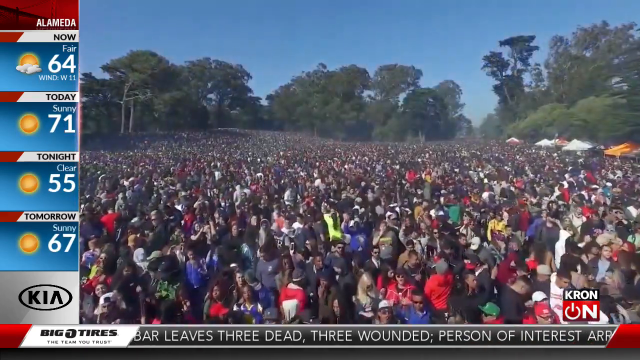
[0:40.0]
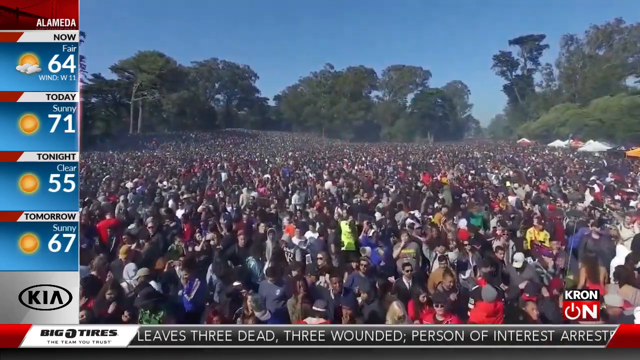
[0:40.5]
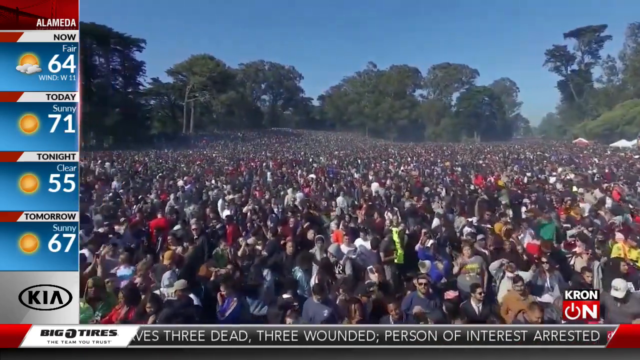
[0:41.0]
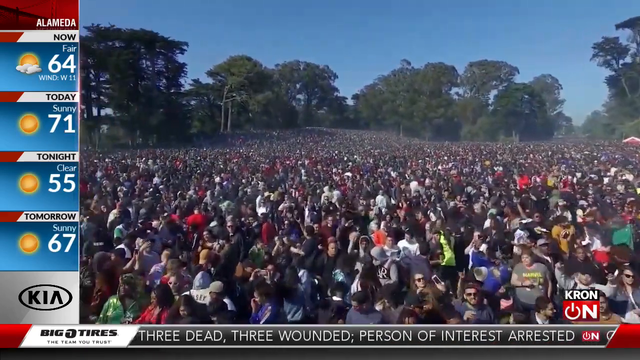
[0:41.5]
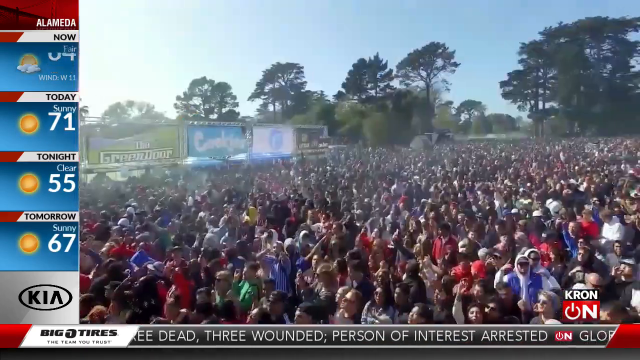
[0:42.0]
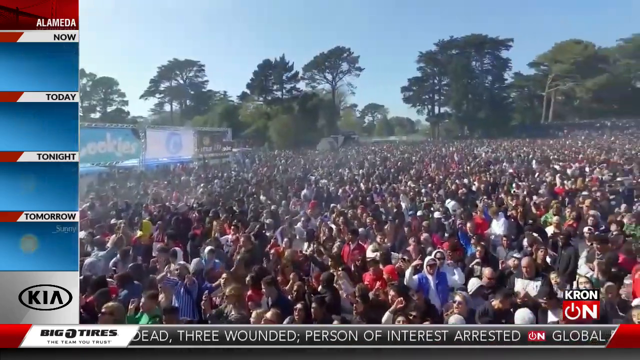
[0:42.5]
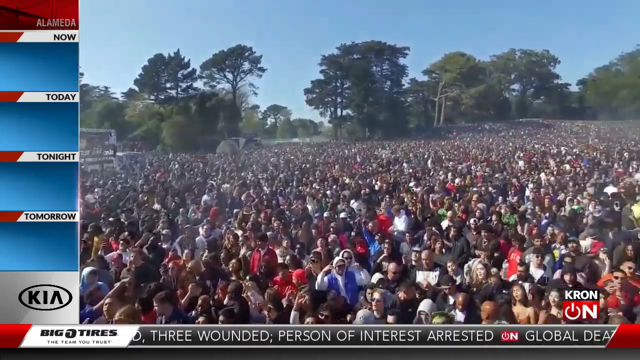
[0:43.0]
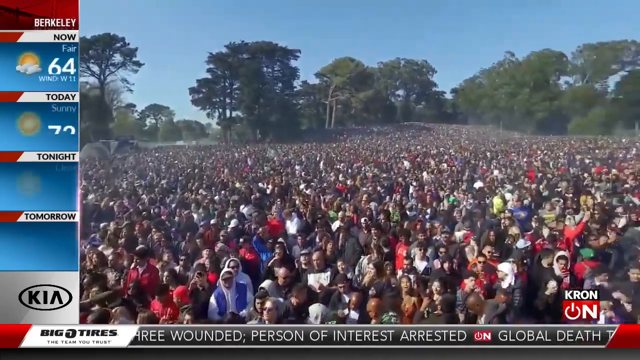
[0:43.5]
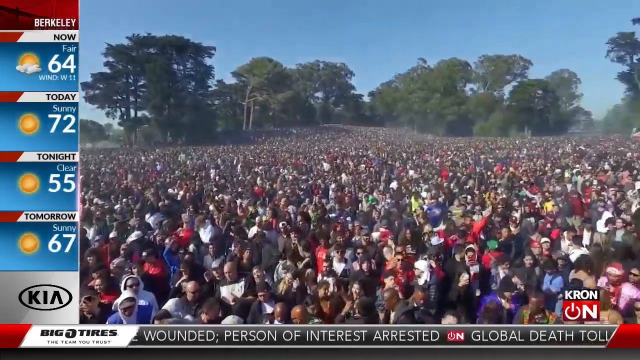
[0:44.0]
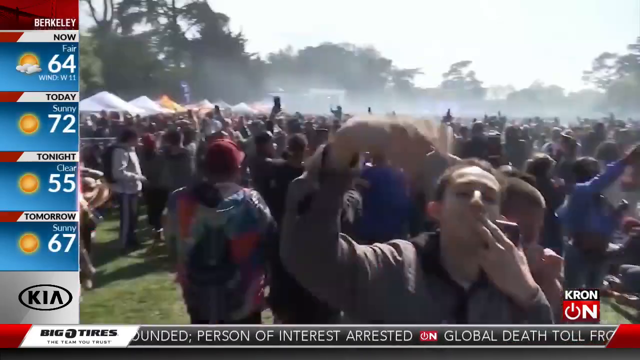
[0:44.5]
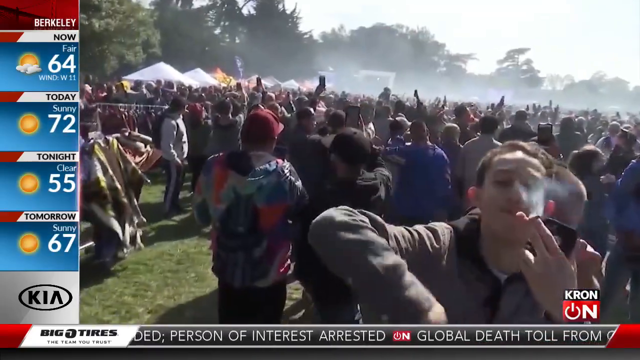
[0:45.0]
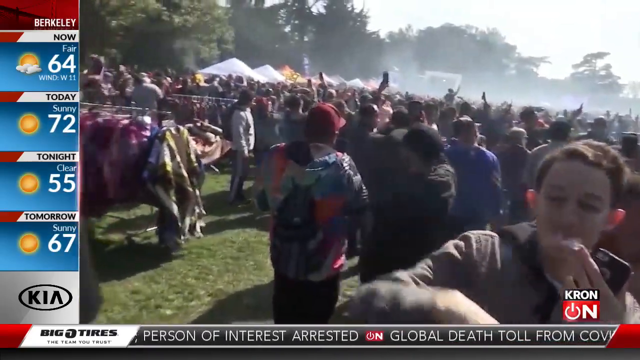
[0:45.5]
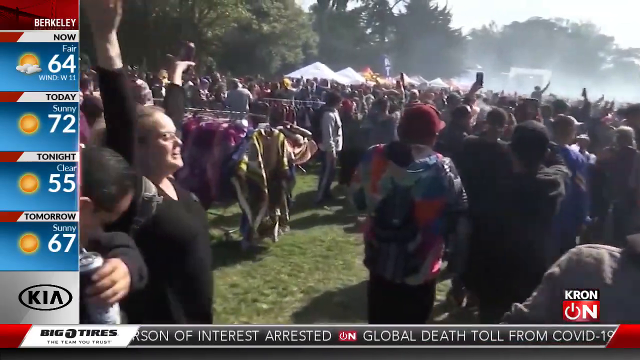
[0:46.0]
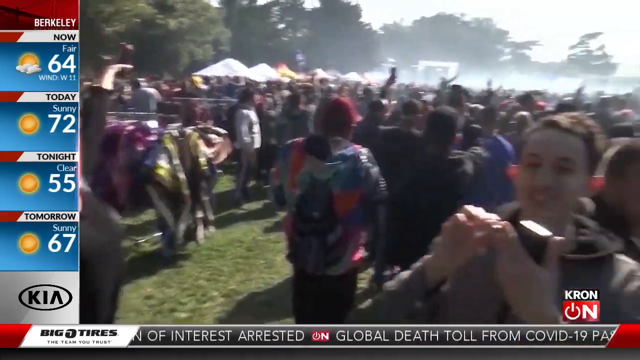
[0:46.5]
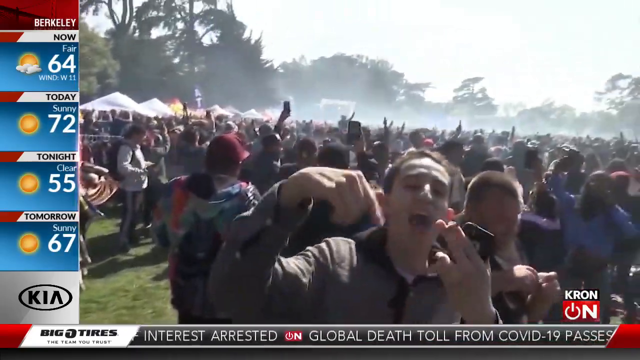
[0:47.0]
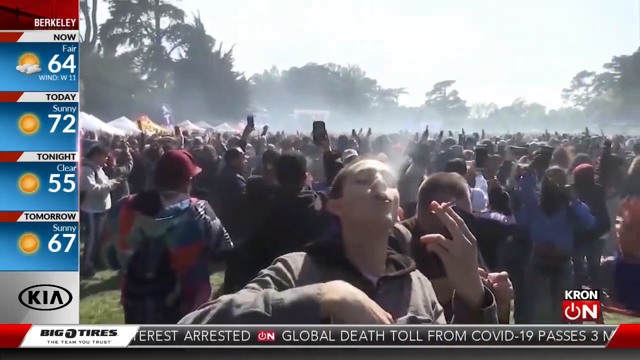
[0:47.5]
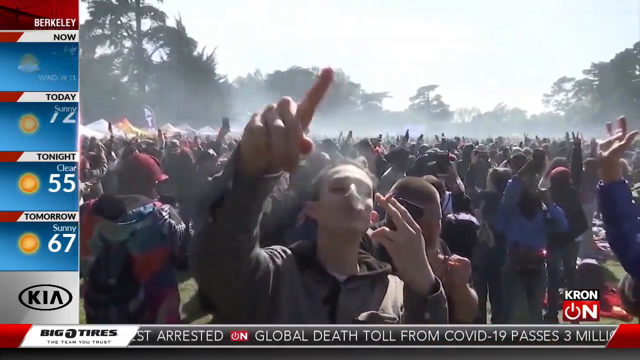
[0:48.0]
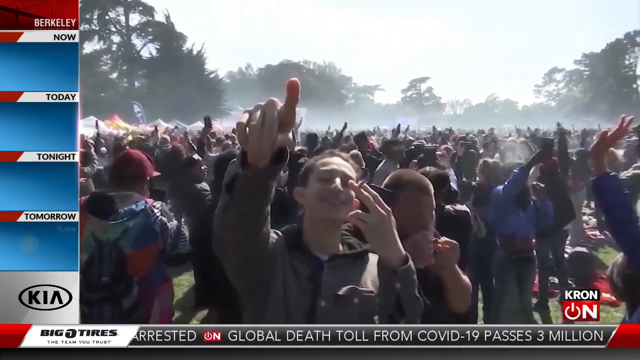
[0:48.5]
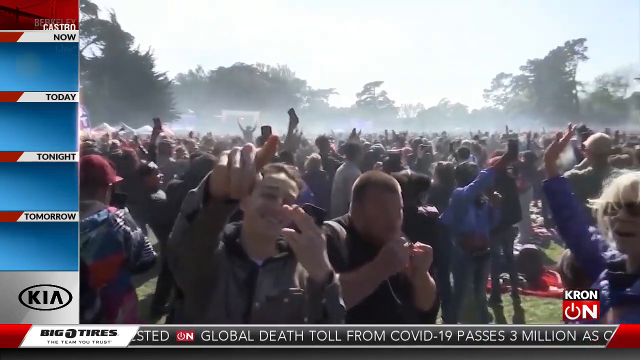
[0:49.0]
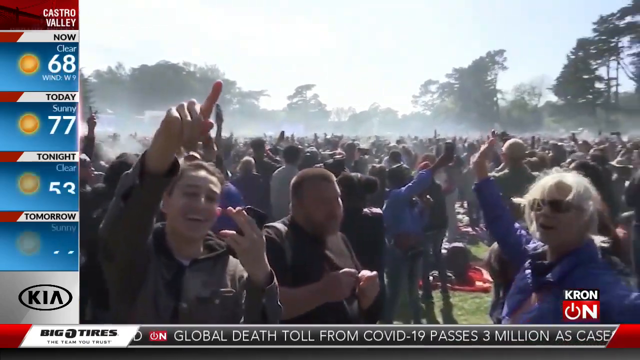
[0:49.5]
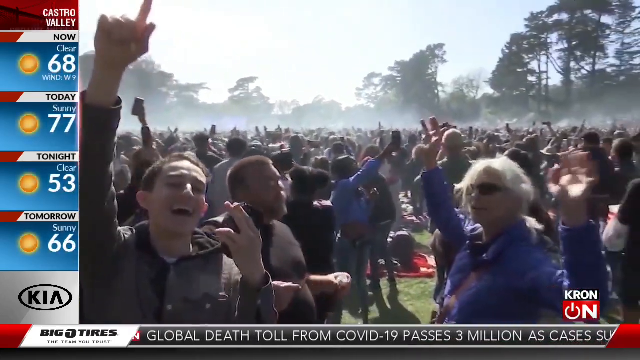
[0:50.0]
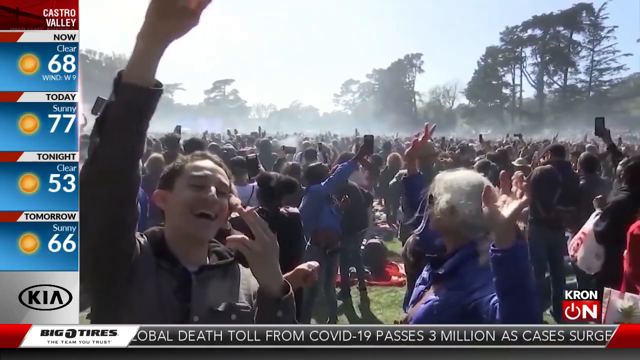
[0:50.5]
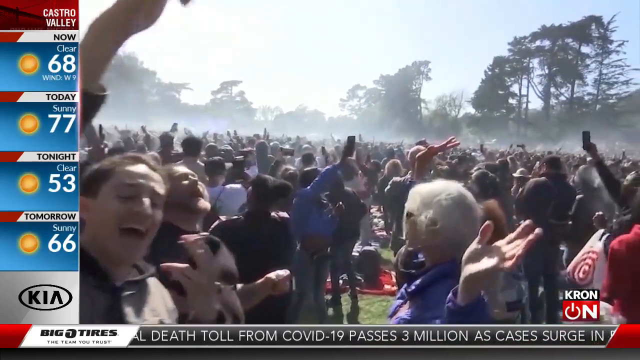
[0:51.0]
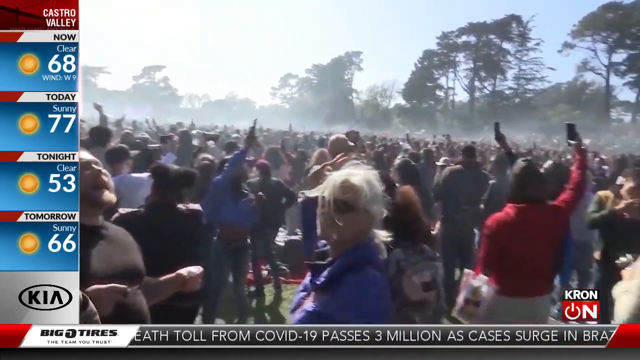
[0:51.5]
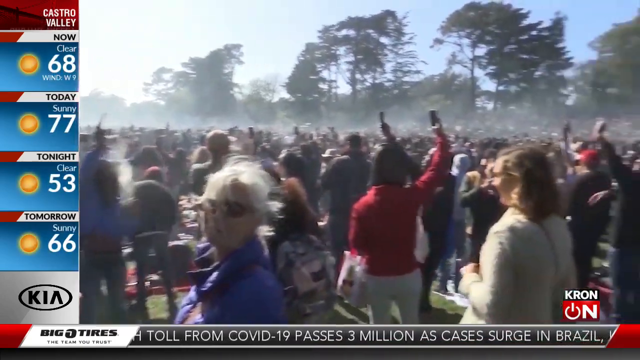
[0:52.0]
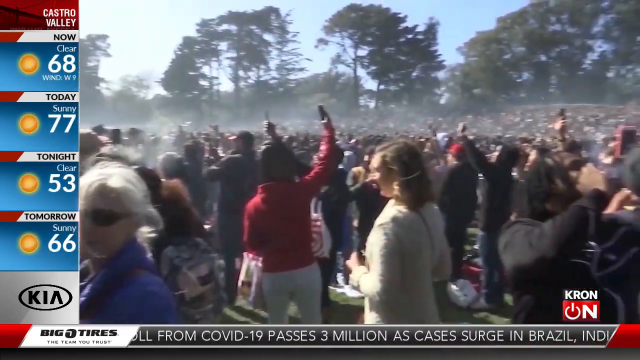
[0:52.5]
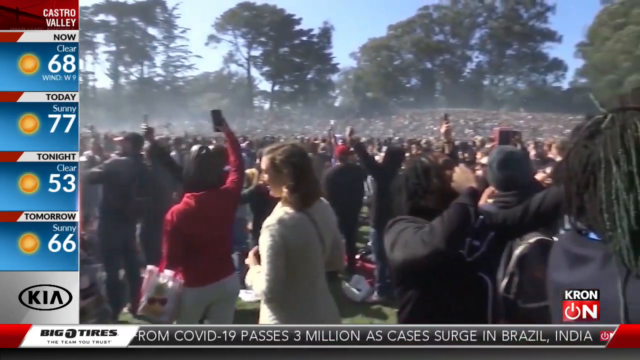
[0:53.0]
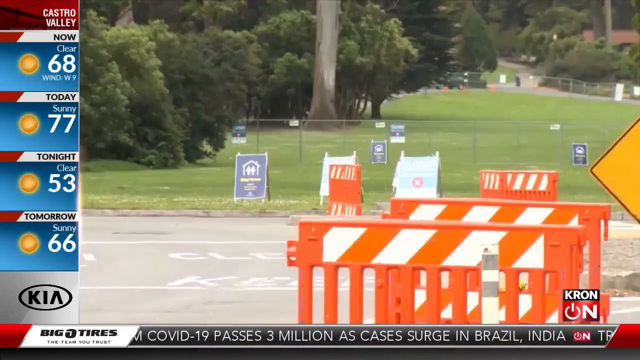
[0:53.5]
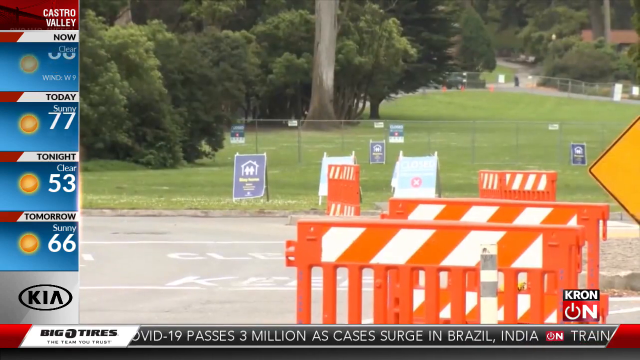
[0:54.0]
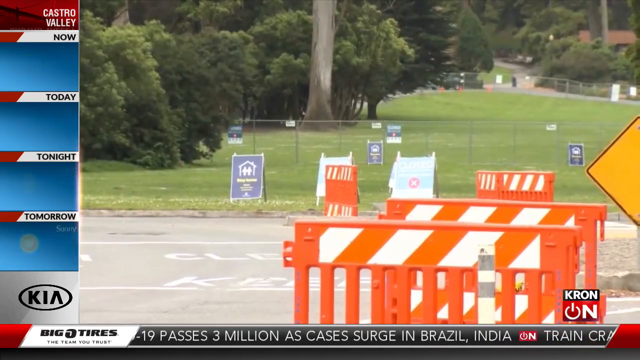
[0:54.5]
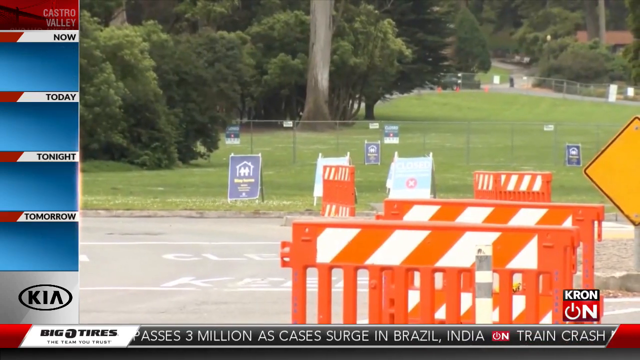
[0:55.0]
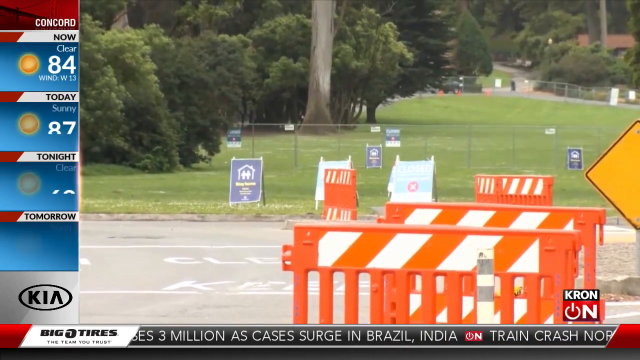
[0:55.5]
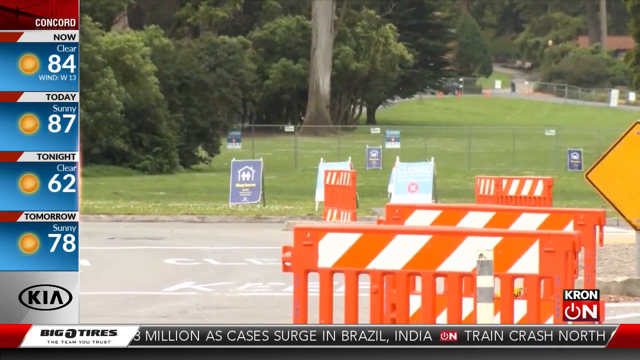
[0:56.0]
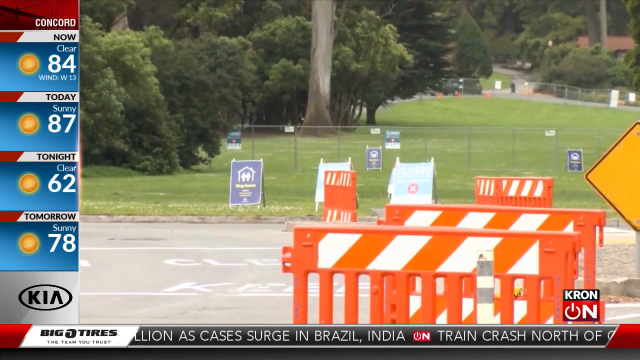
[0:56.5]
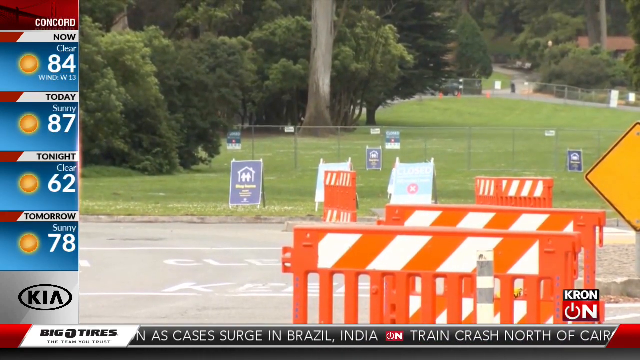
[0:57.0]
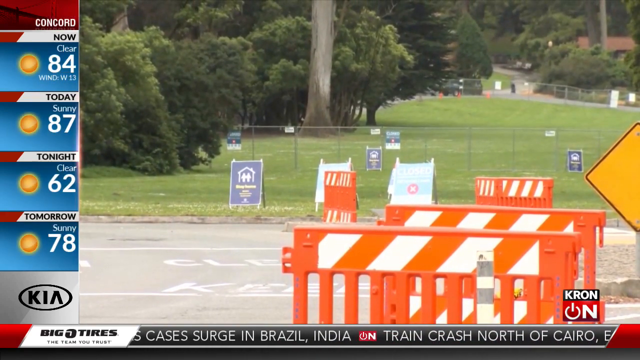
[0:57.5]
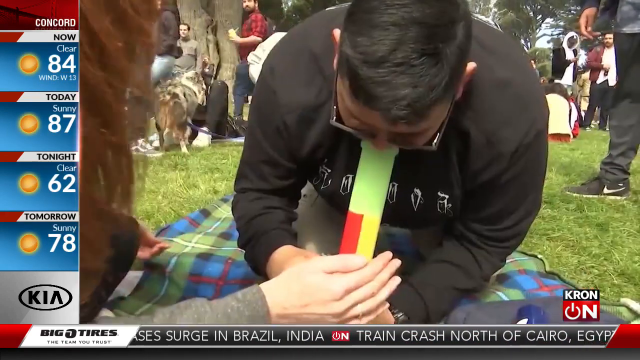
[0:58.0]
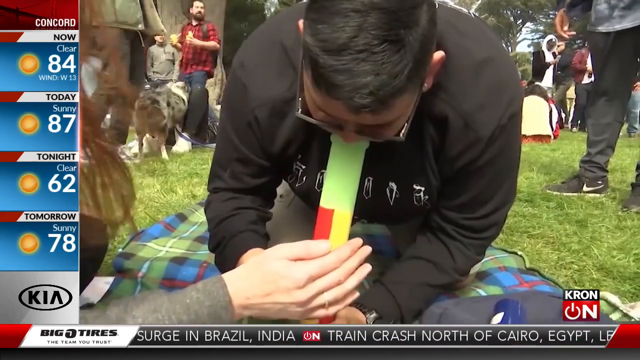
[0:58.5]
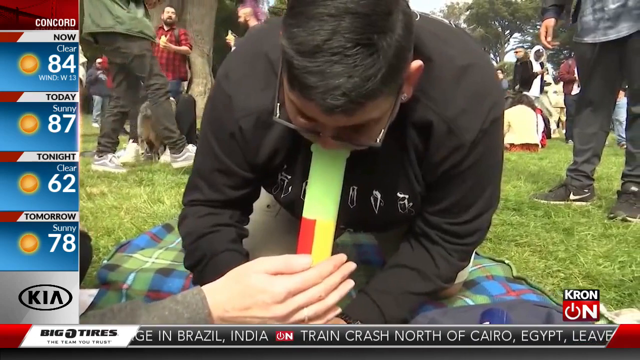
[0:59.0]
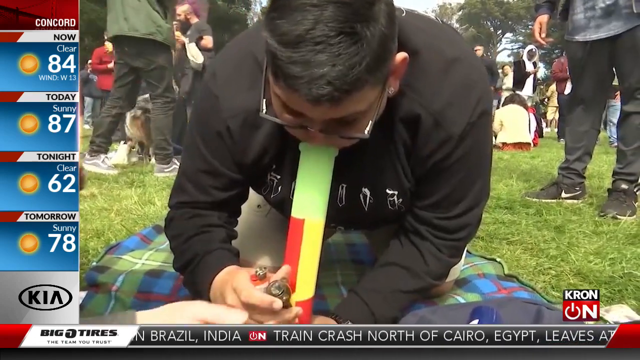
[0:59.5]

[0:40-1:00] A crowded area is full of people who look to be in their 20s and 30s. Some wear red clothing, others wear dark-coloured clothing, and some wear shades. The majority appear to be intoxicated, and many of them are smoking. A road is shown with no one on it, only some orange objects that look like roadblocks.